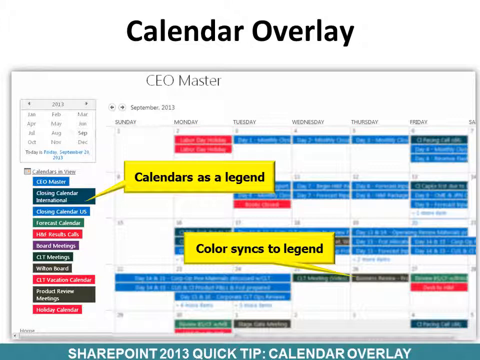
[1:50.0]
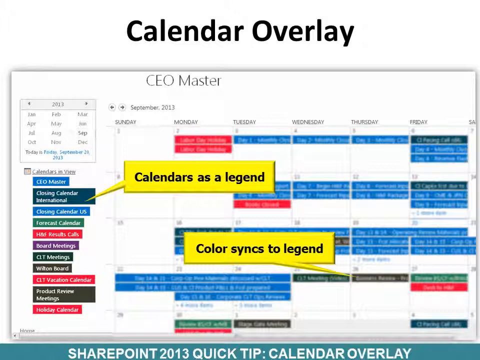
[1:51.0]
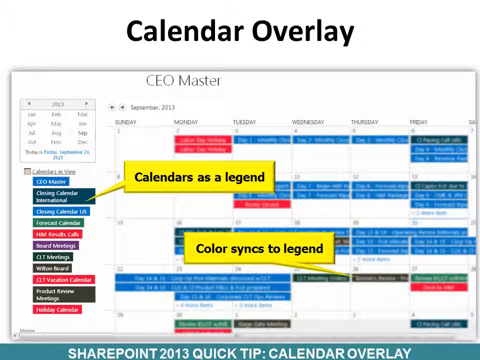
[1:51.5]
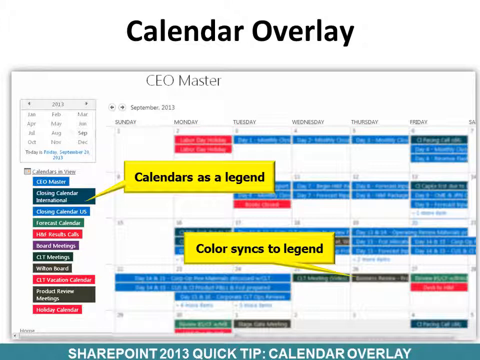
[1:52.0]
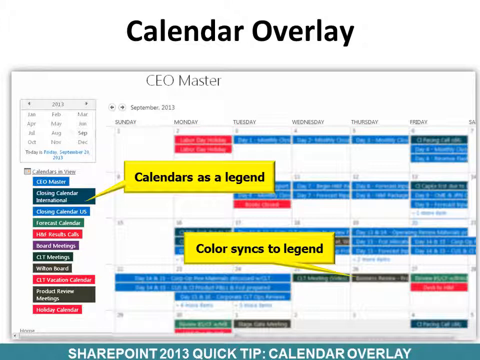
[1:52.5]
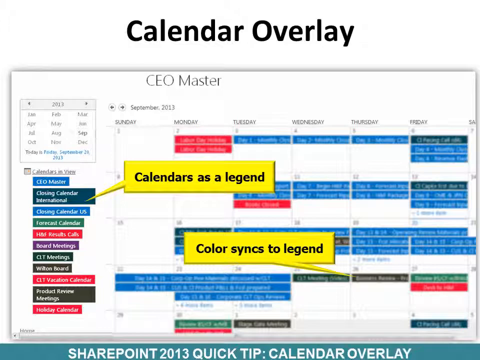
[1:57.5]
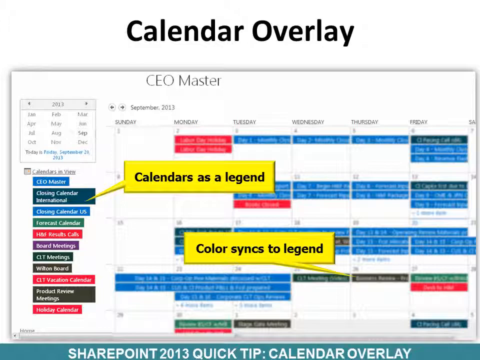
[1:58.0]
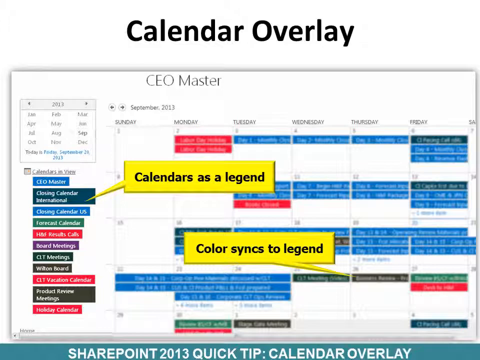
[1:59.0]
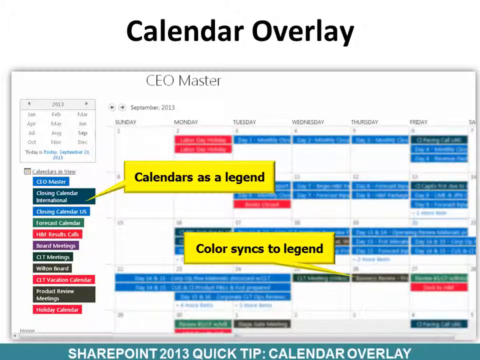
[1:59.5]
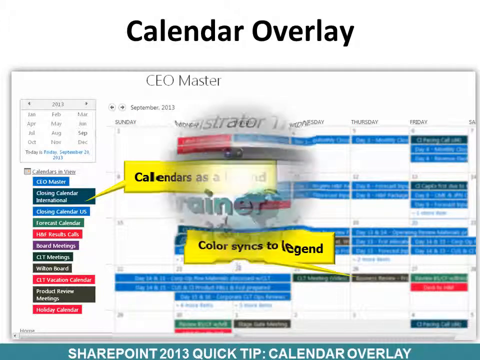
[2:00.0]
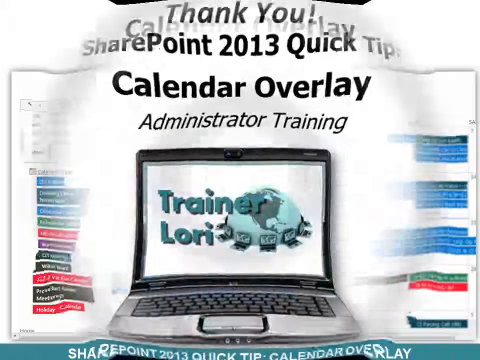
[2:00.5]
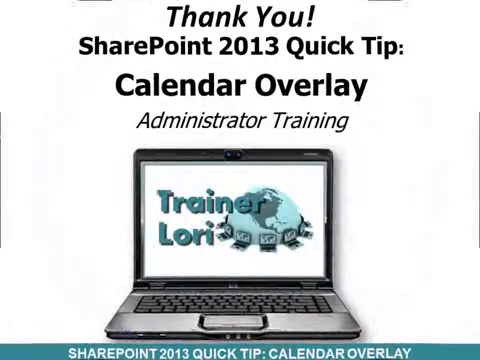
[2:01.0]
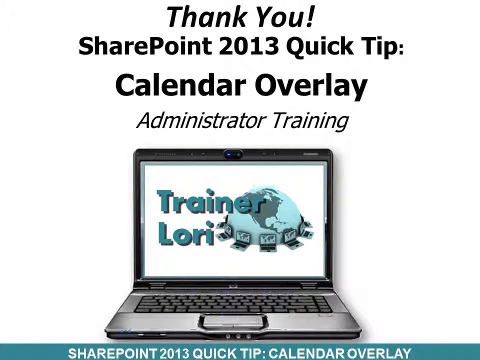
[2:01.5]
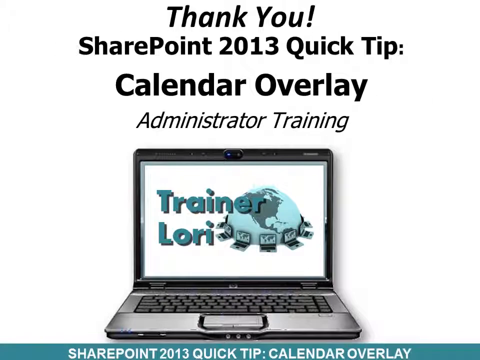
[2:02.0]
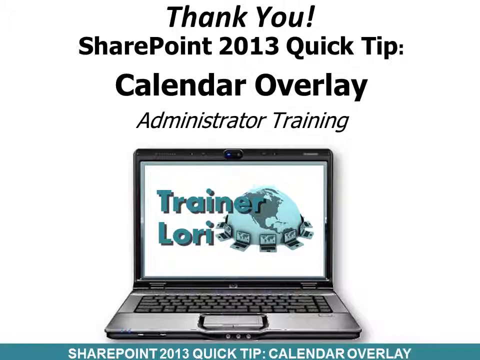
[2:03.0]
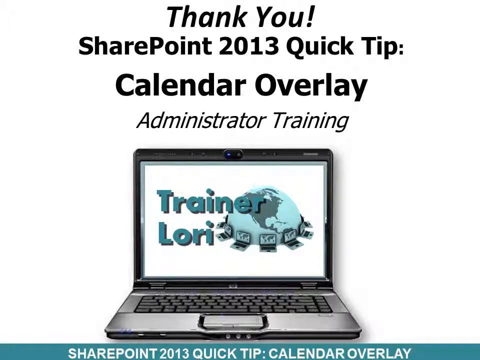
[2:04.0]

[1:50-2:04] A CEO master calendar is shown along with the settings for making the colors sync to a legend. The calendar uses the colors red, blue, purple, and black, with white fonts and descriptions of the calendars, highlighting different things going on from Sunday to Friday, with each color representing a certain type of task.